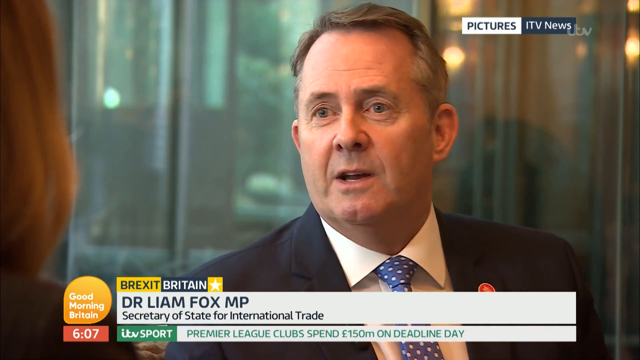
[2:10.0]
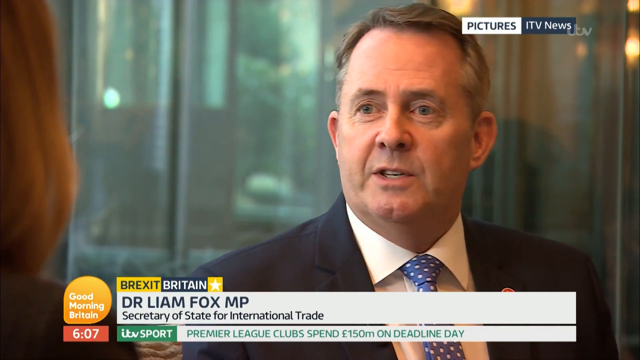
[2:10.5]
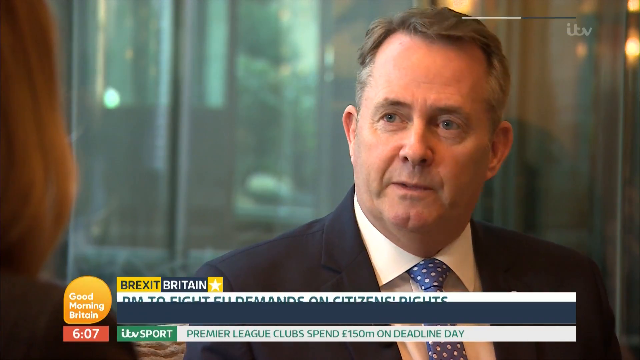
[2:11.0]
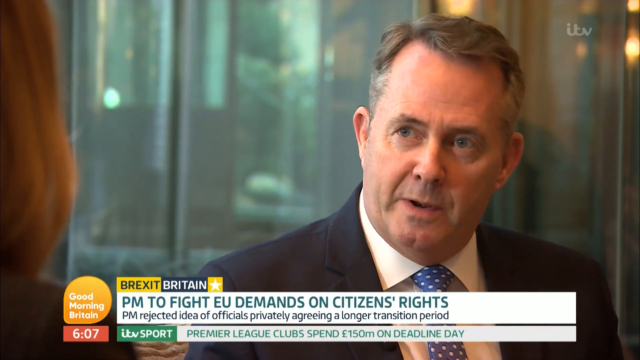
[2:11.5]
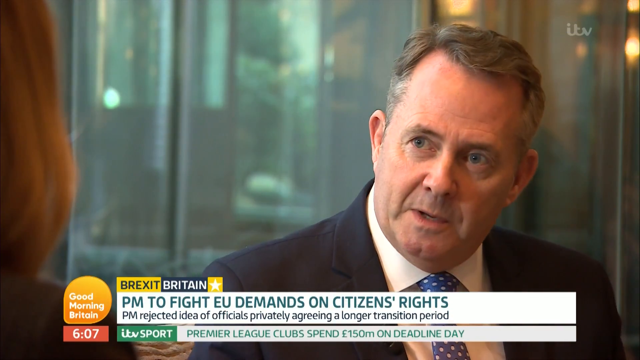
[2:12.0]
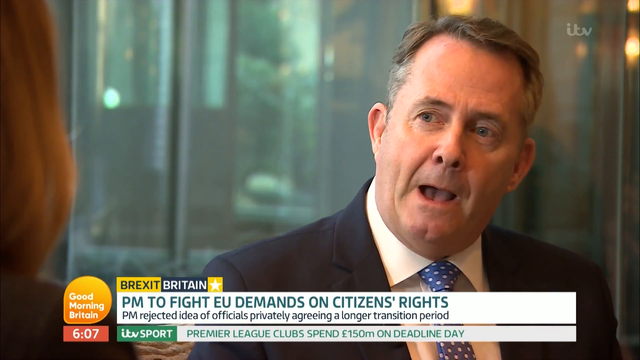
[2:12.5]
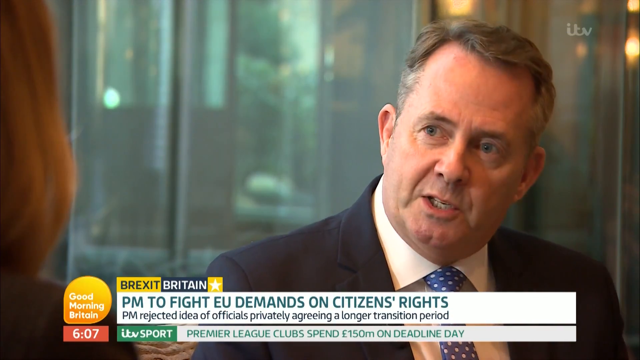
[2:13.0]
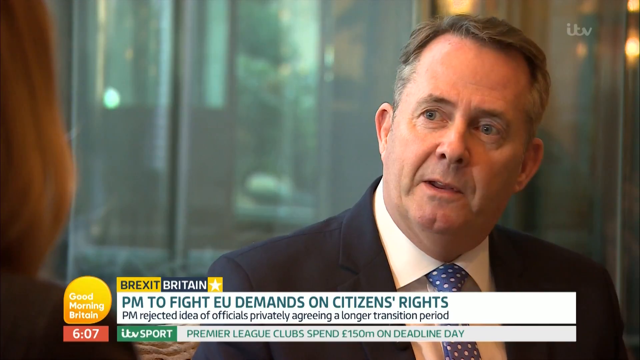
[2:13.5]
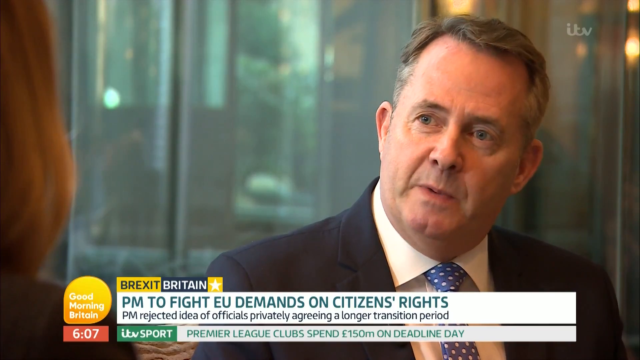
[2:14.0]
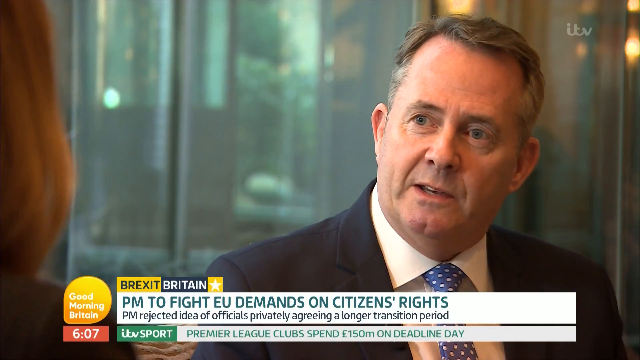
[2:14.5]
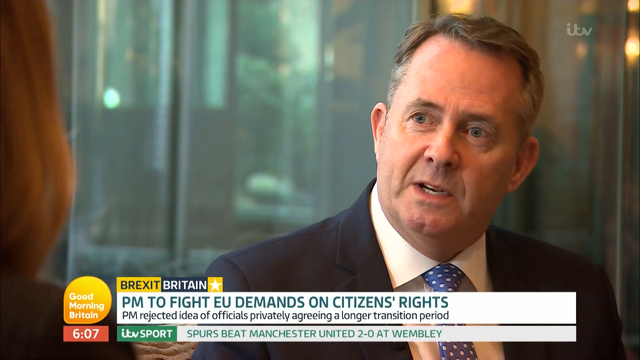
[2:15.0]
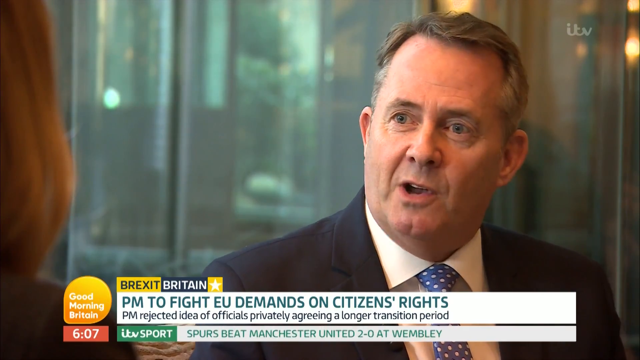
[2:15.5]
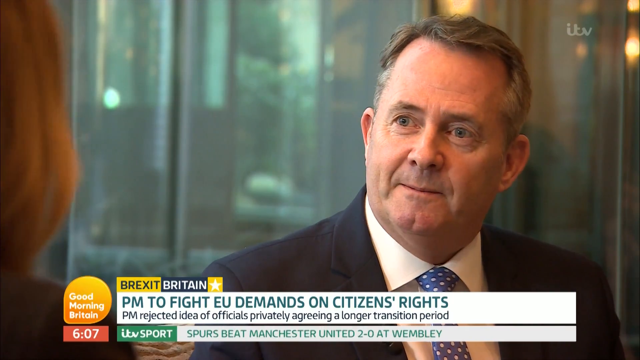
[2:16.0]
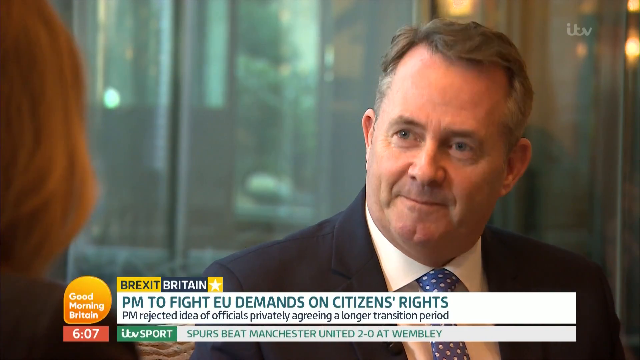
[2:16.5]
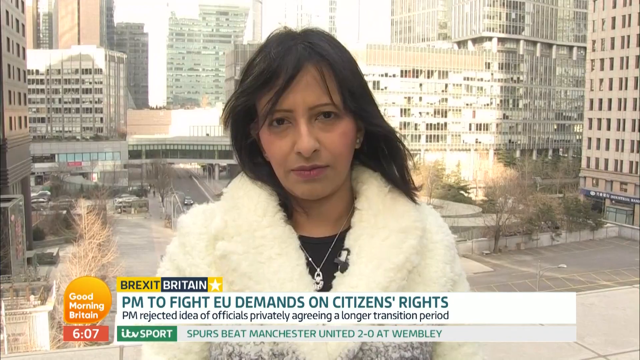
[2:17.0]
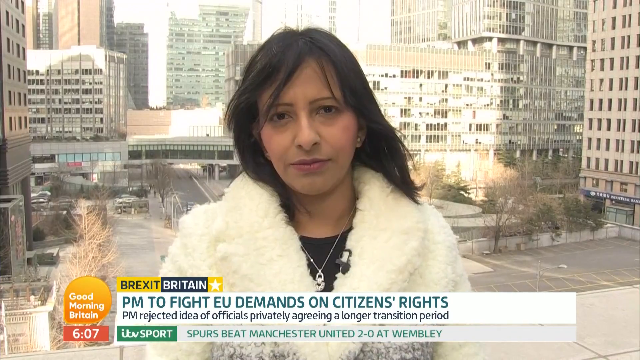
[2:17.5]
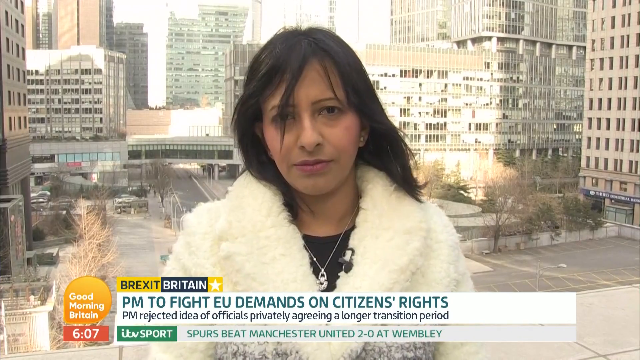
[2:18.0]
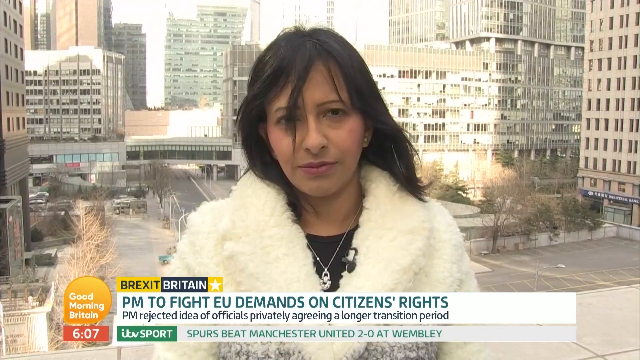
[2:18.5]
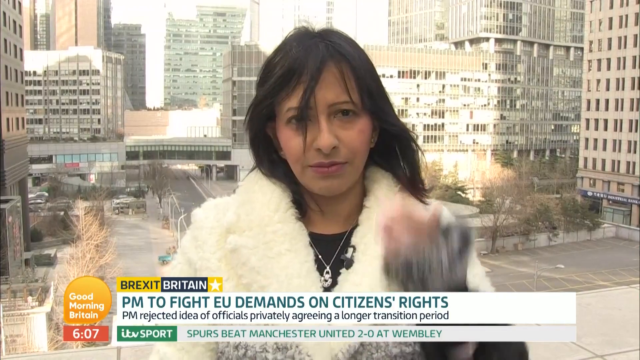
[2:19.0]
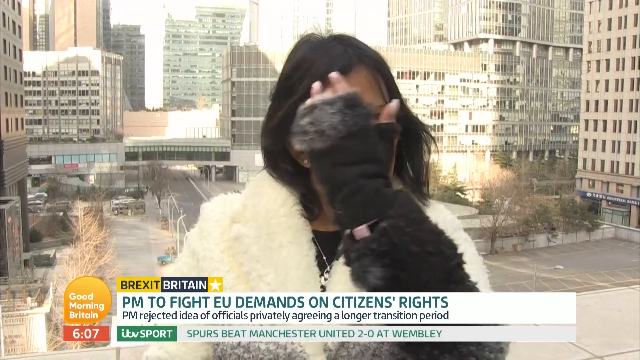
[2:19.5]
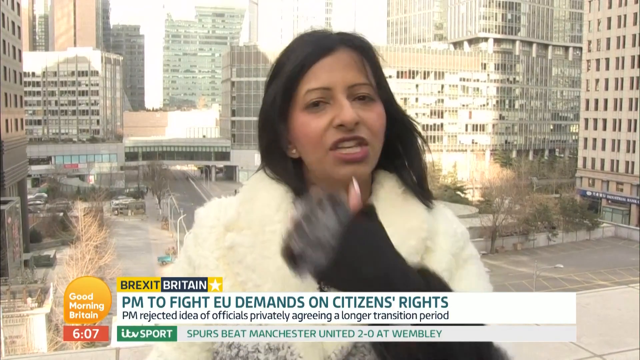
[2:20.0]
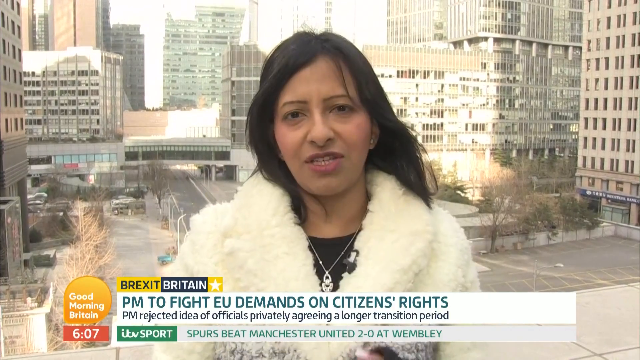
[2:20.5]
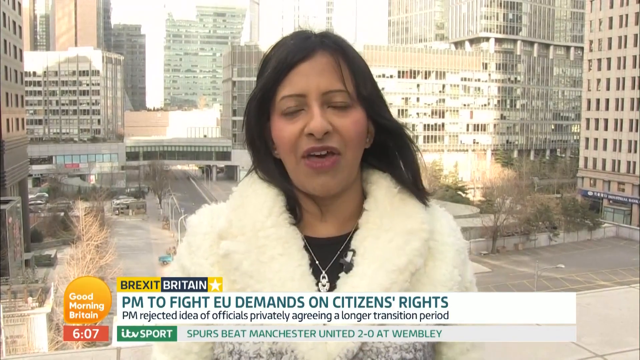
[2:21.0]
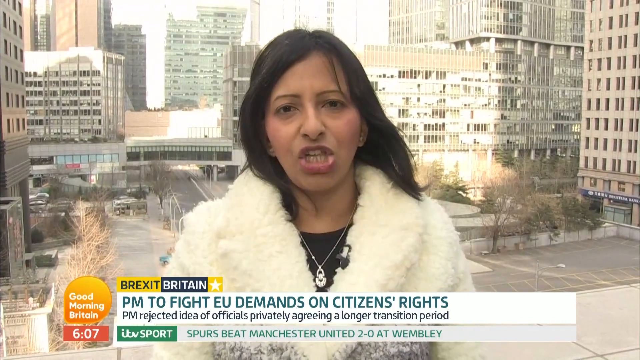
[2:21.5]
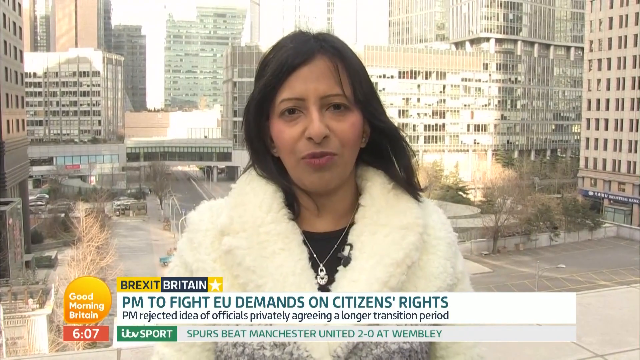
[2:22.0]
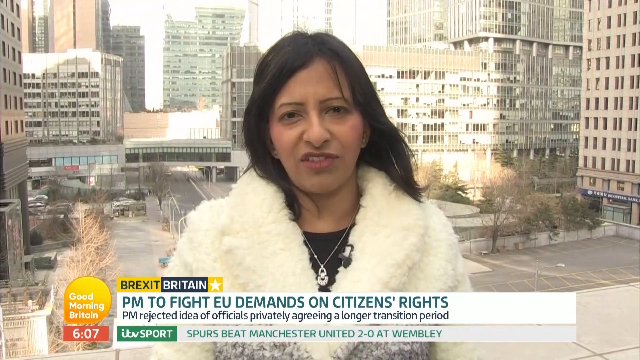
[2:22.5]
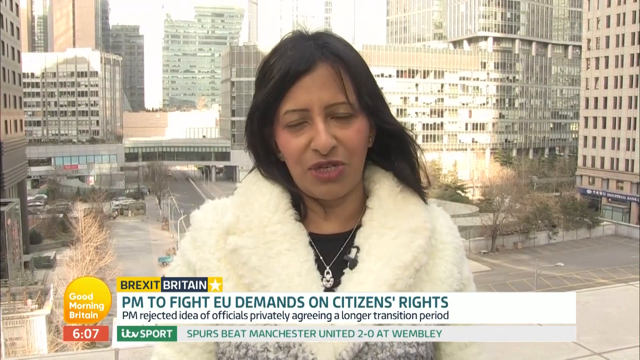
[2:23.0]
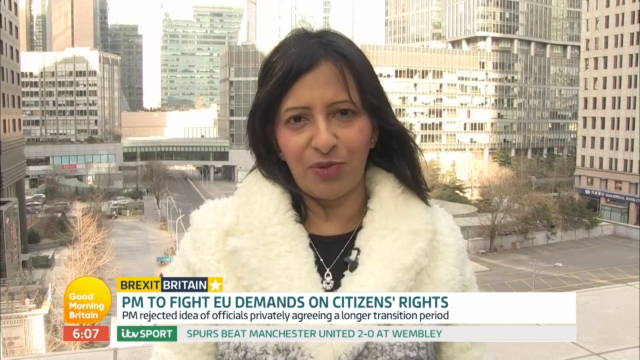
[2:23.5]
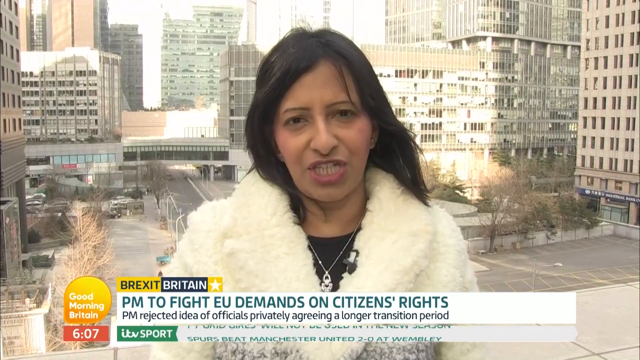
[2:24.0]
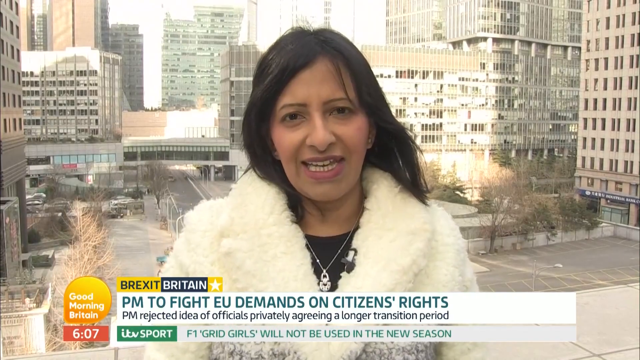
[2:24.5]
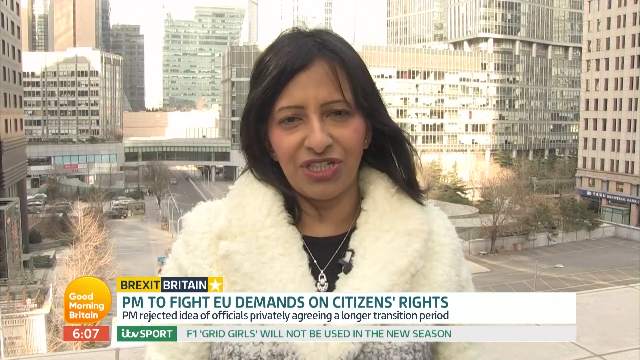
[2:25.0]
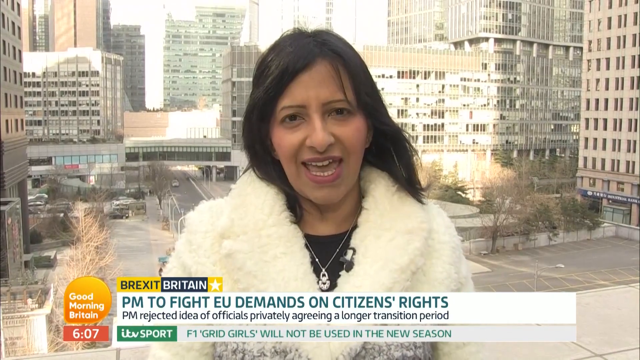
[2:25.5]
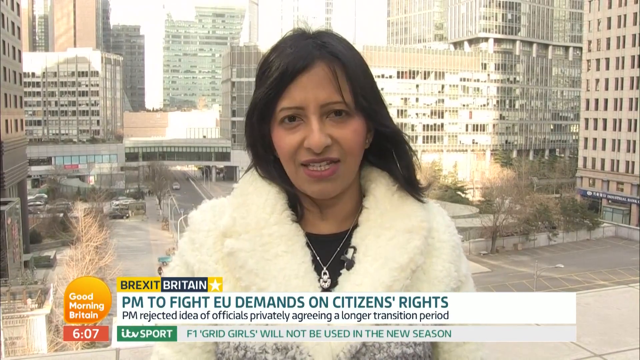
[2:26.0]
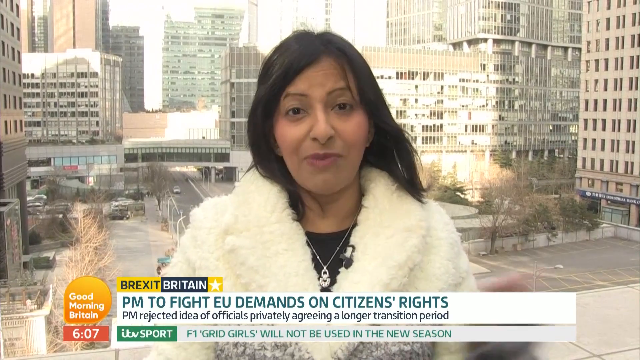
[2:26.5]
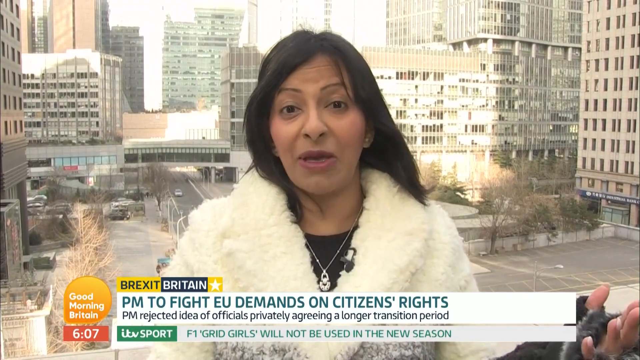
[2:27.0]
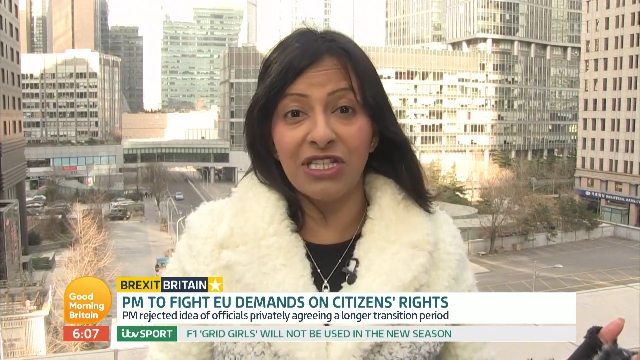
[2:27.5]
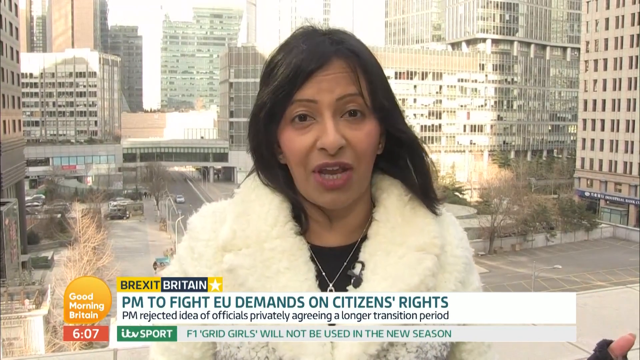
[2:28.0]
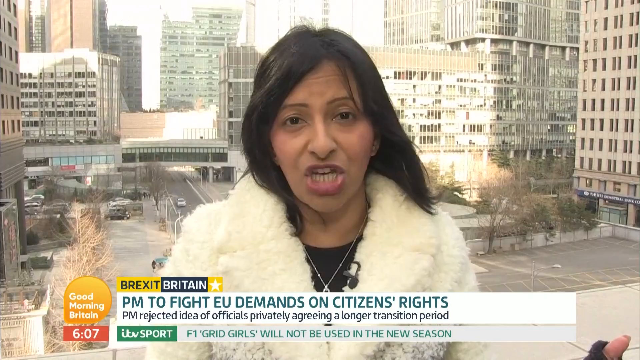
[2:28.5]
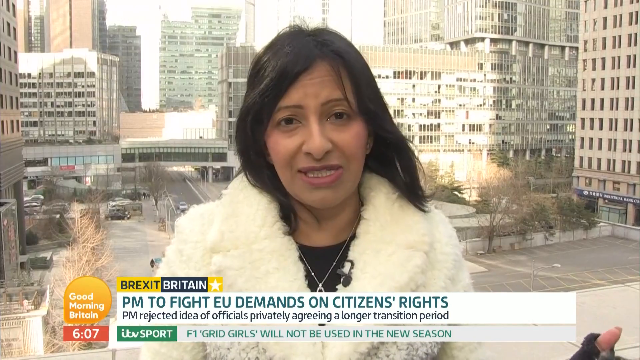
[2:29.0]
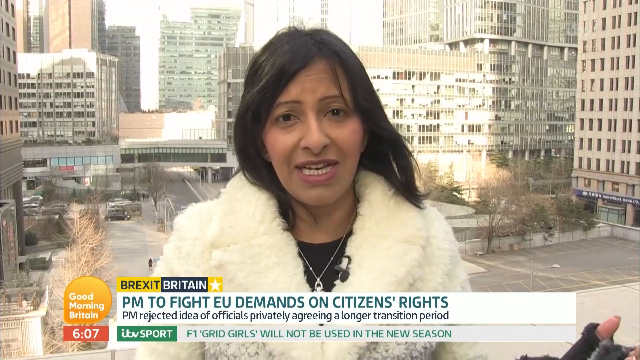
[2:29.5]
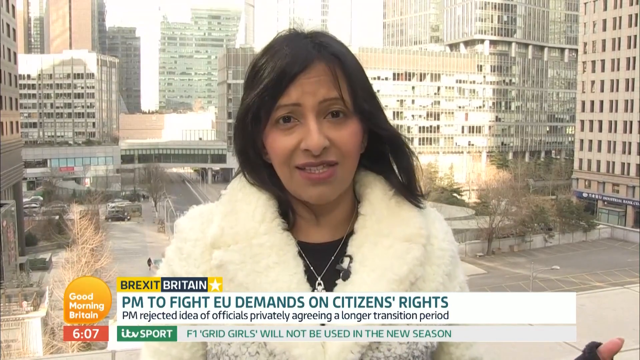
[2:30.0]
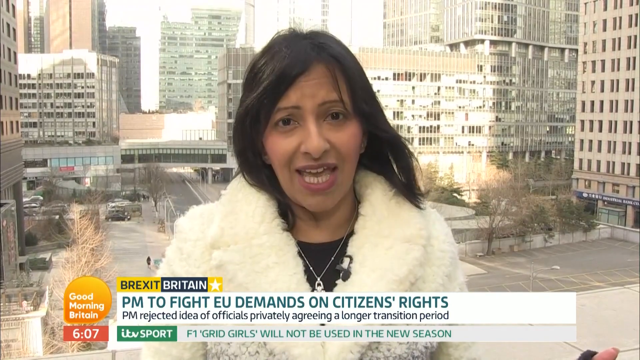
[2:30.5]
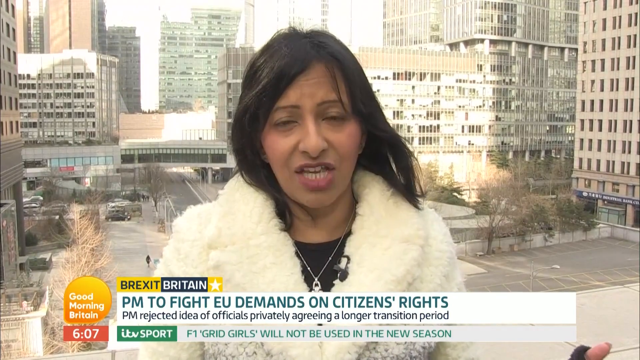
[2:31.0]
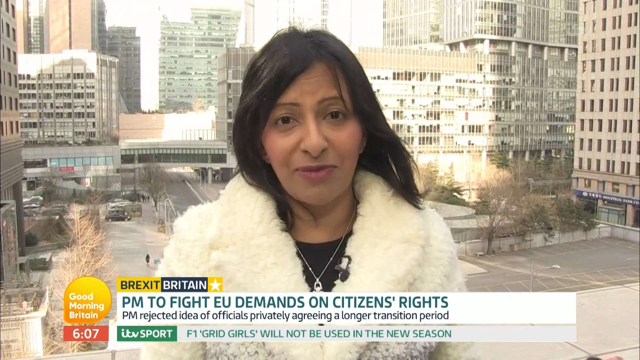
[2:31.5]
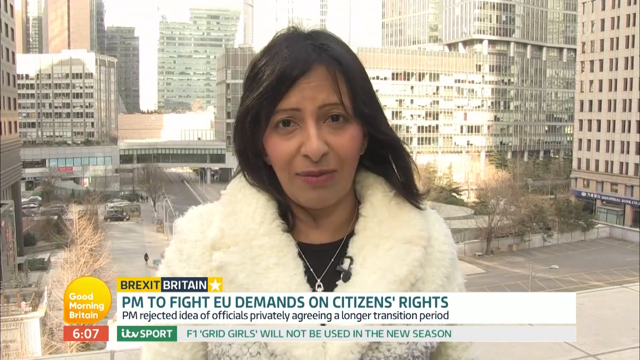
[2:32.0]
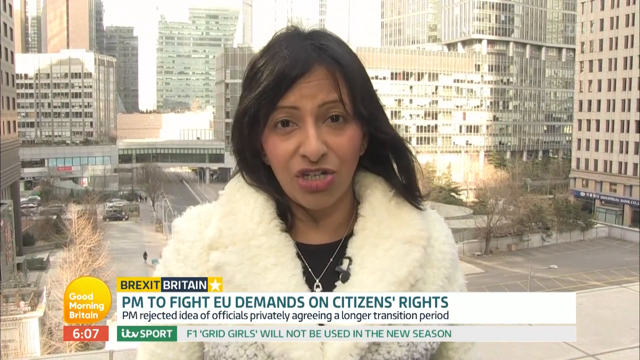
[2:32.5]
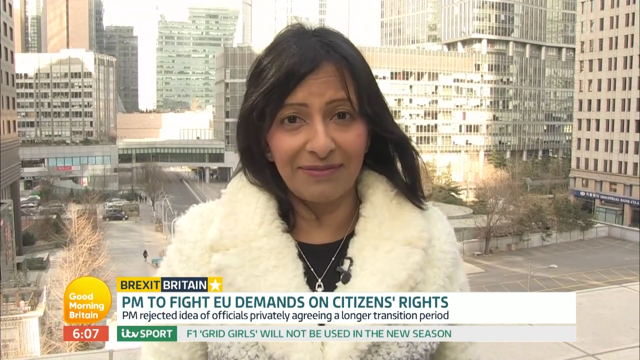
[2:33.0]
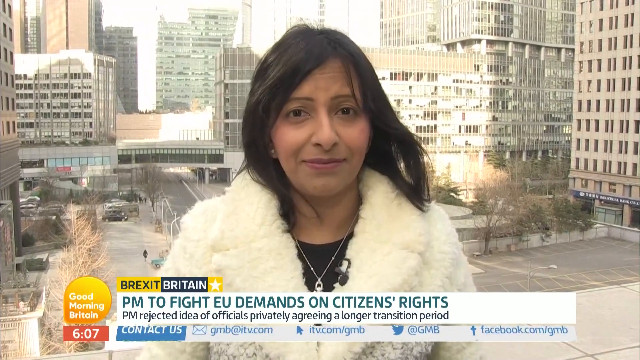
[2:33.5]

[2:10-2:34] The broadcast shows an interview with Dr. Liam Fox MP, the Secretary of State for International Trade. The interviewer seems to be a woman who is not fully seen; only a bit of her hair is visible on the left side. The man looks American and wears a blue suit, a white shirt and a tie with white spots. The scene cuts short and a woman who looks Pakistani appears, seemingly a news reporter for Good Morning Britain. Headlines underneath her say "PM to fight EU demands on citizens' rights. PM rejected idea of officials privately agreeing a long transition period." It looks like a windy morning.